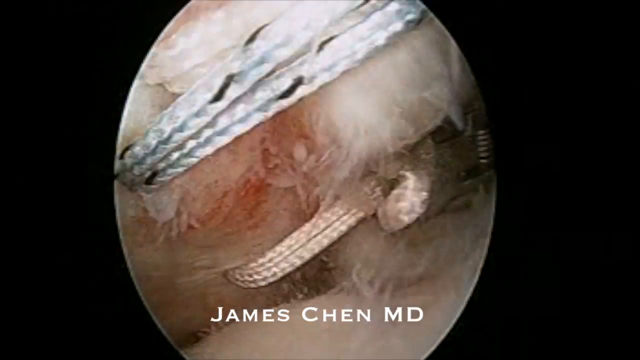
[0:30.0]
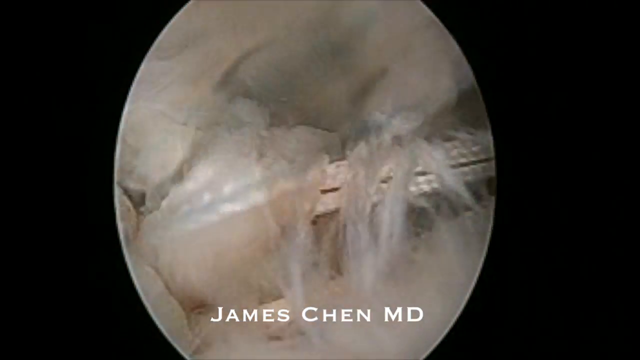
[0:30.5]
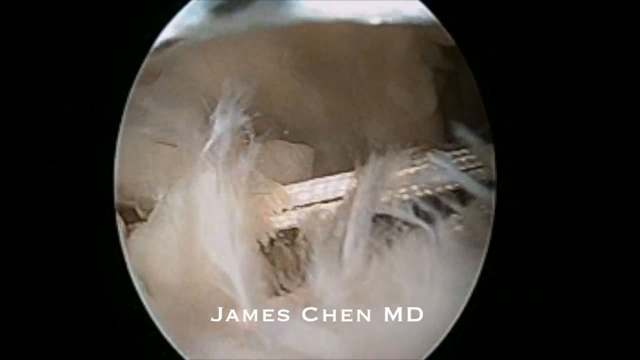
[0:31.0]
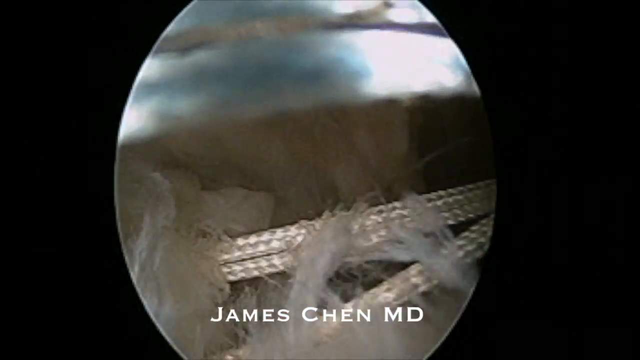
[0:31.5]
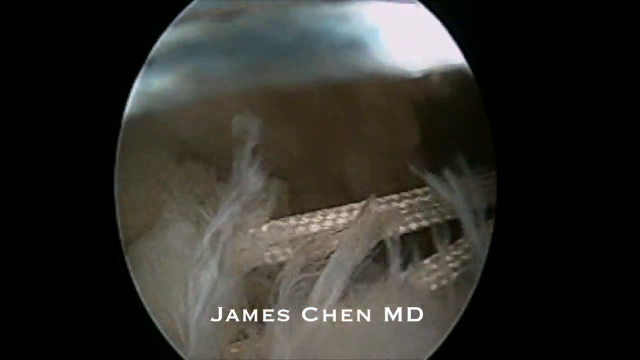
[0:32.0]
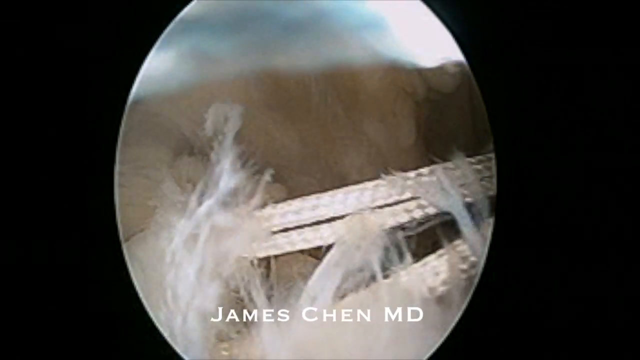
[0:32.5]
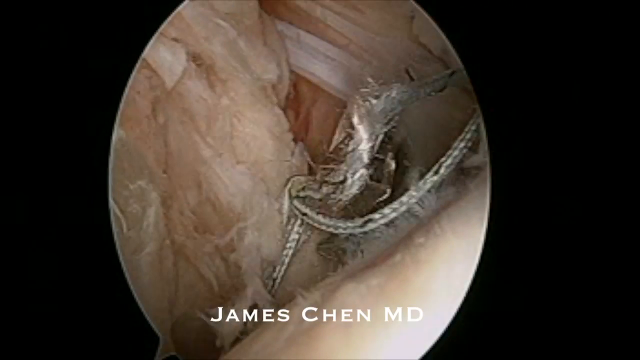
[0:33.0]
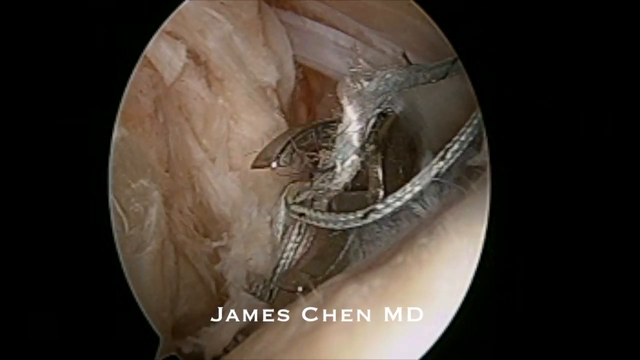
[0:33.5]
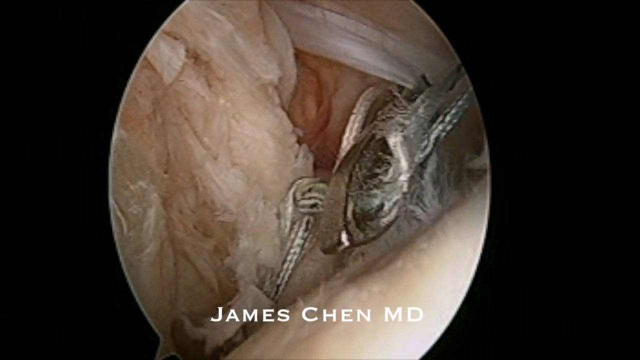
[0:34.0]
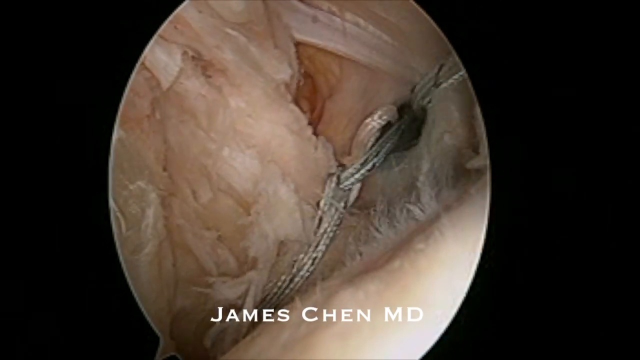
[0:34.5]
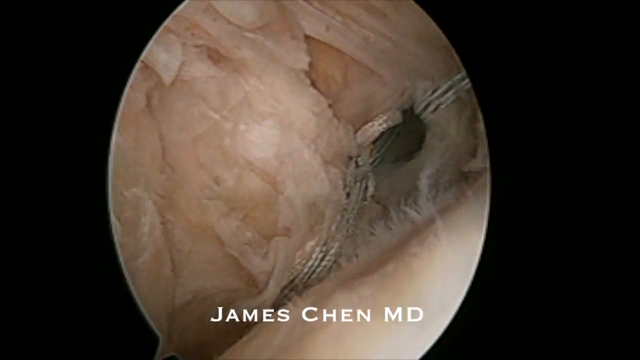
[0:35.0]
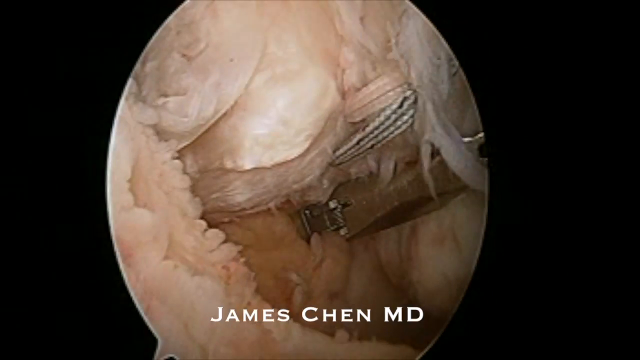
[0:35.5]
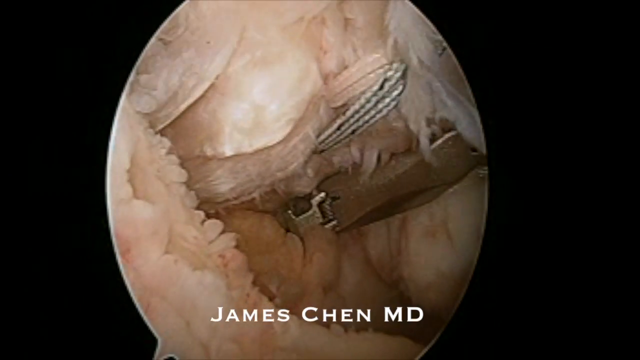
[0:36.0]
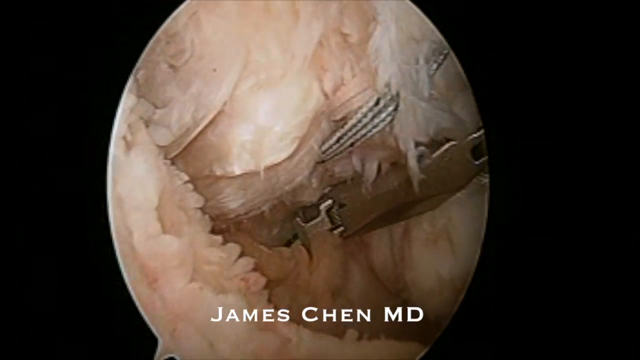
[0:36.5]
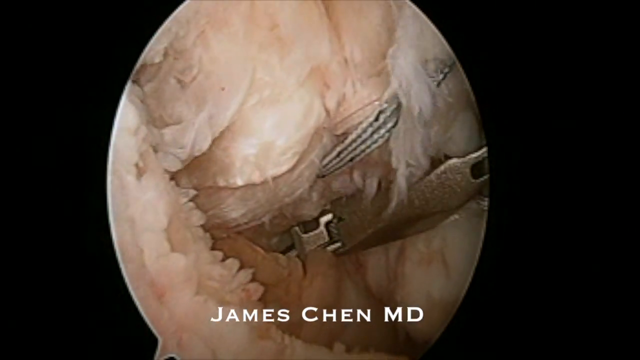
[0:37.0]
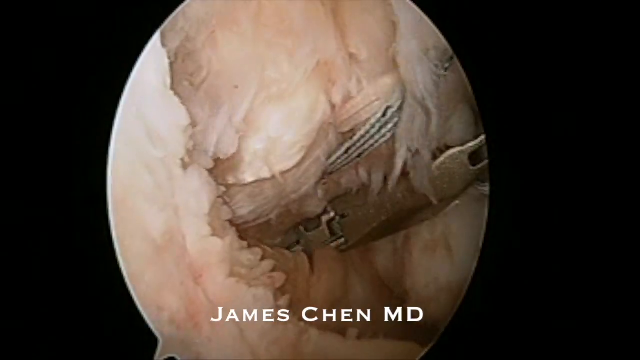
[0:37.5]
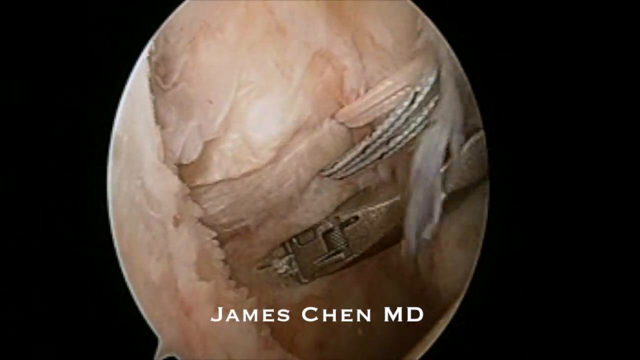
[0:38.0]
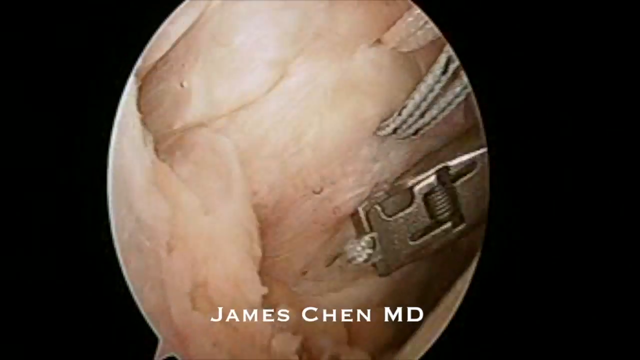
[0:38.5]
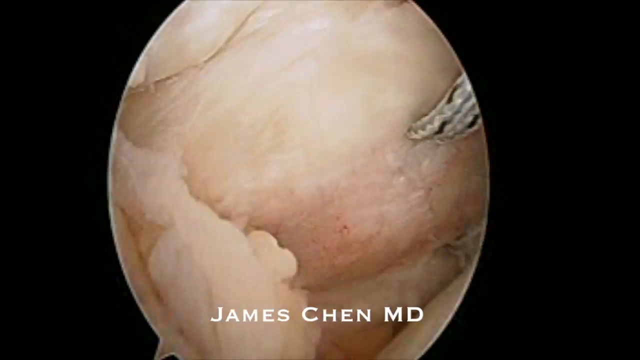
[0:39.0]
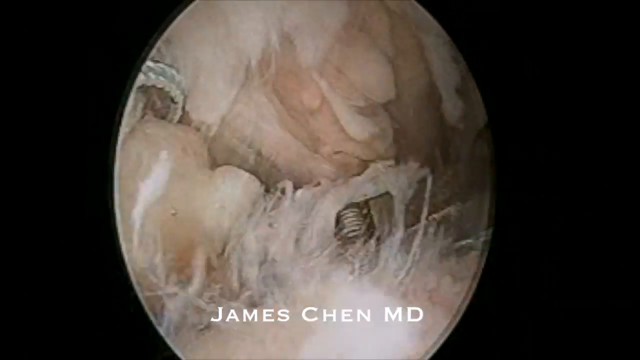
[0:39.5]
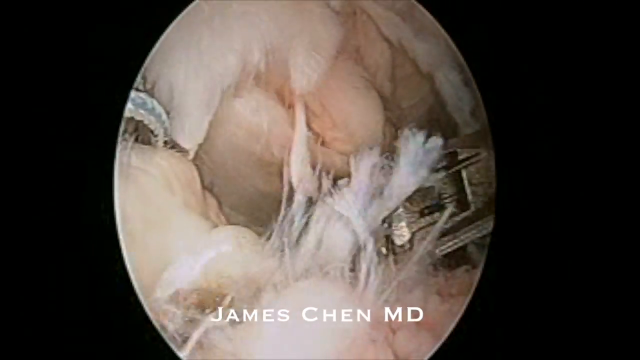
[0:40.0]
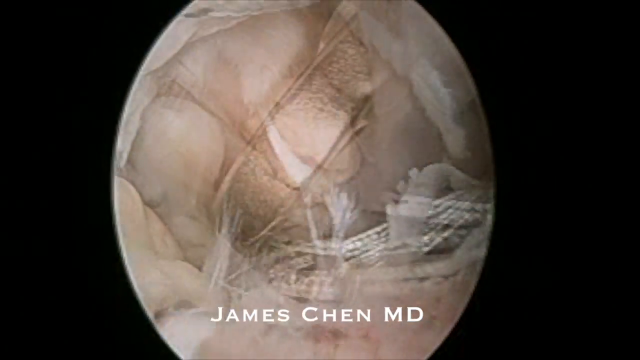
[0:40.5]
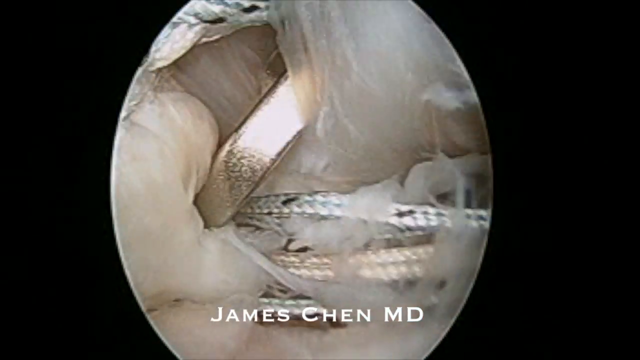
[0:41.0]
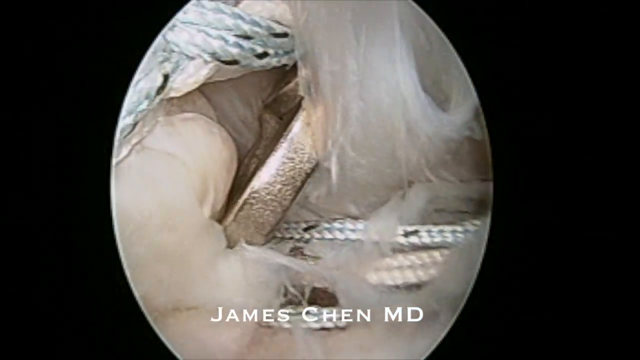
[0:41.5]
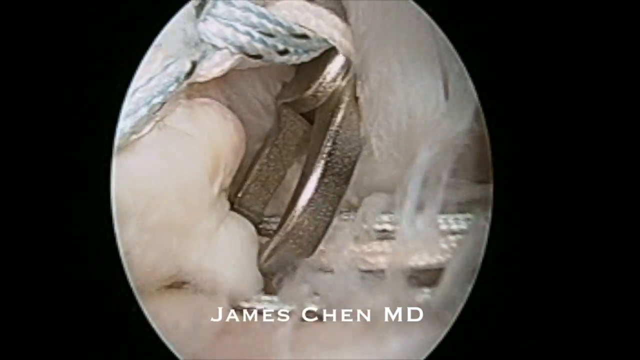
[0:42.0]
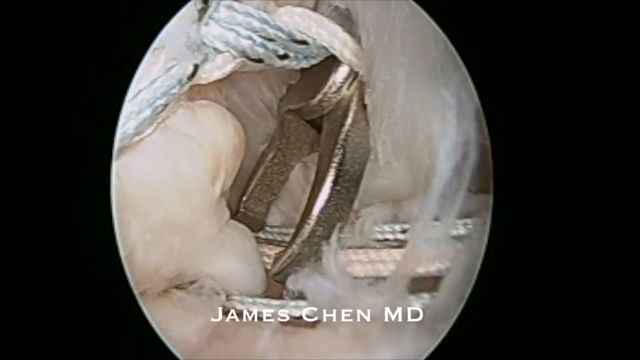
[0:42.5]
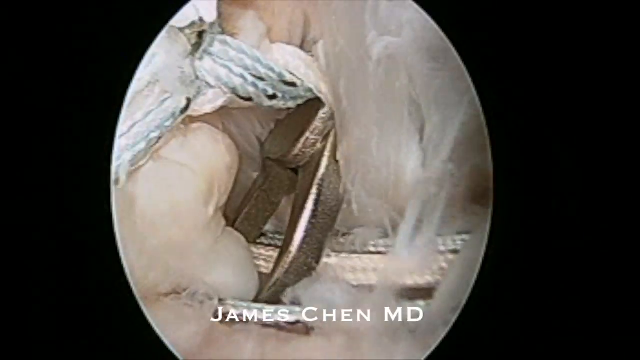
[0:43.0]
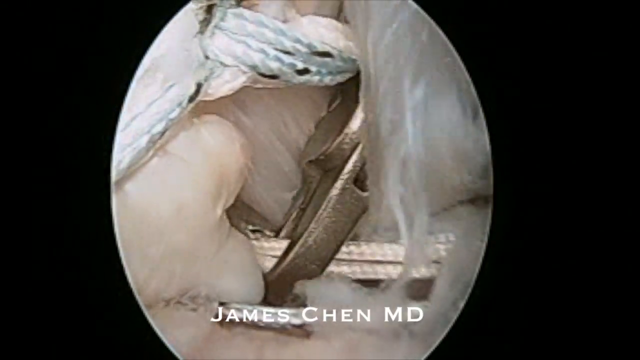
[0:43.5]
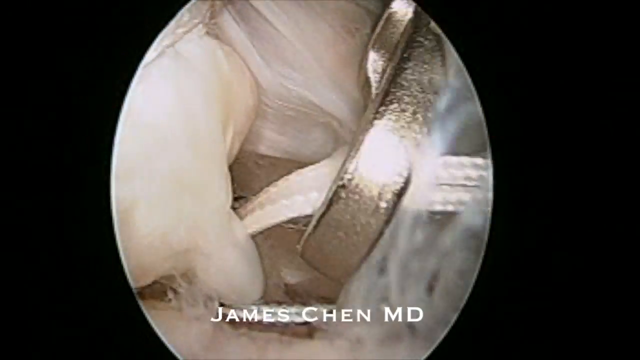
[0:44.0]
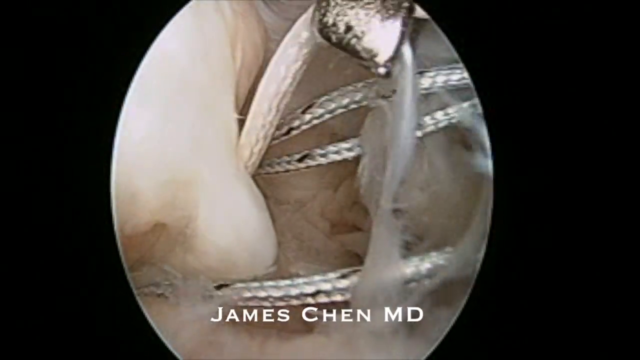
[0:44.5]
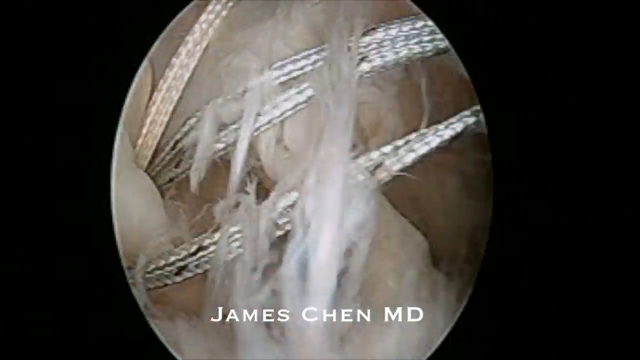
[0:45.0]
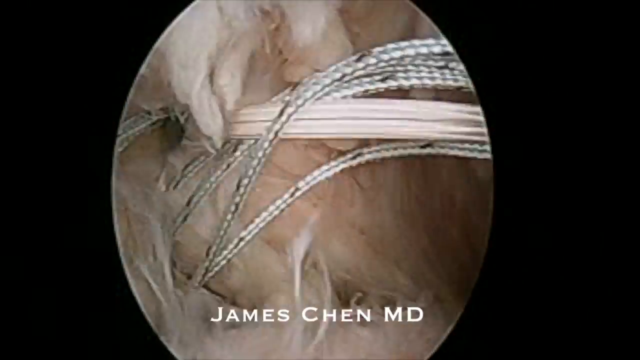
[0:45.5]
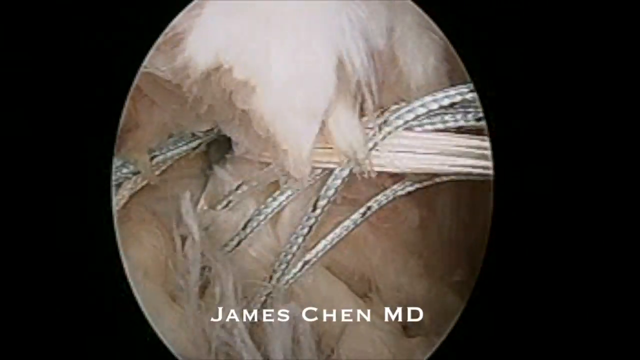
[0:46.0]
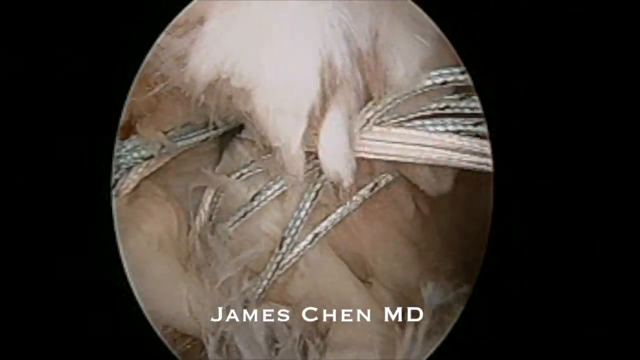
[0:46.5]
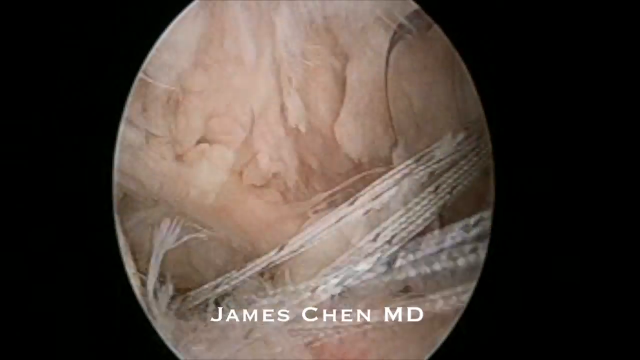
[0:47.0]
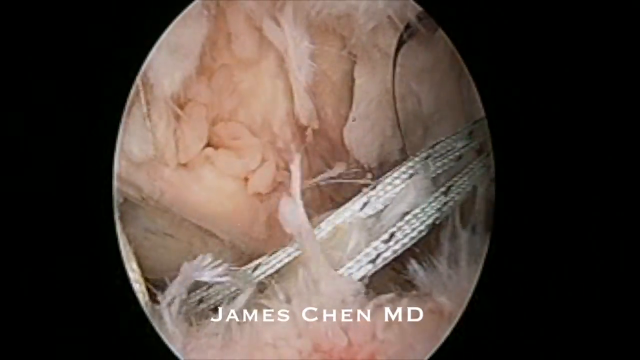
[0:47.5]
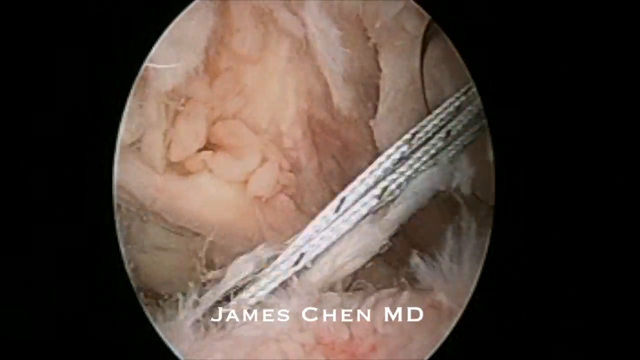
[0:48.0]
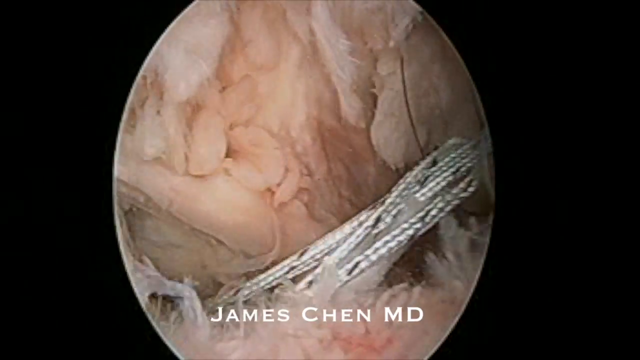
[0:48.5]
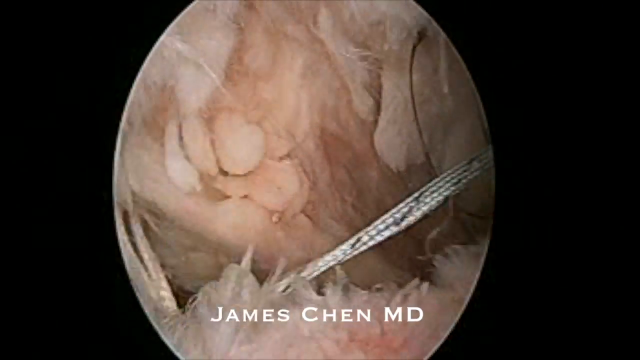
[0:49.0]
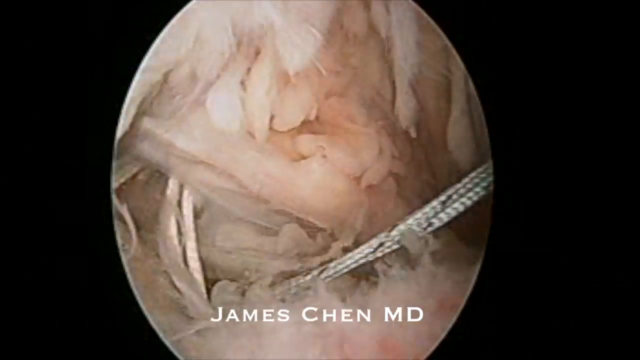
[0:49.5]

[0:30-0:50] The circular view from the camera inside the body continues, with "James Chen MD" at the bottom of the circular image. What appears to be rope is tied and wrapped around part of an internal organ or piece inside, and then the silver instrument or tool comes into view and cuts the end of the string, so it looks like it is tying something off, almost like stitching. More of the string is worked around different parts of the smooth muscle or interior. It seems to be double-roped in each spot, with two strands in each. The rope is mostly white with some black horizontal stripes. At times the rope is pulled through, almost like stitches being given to someone.